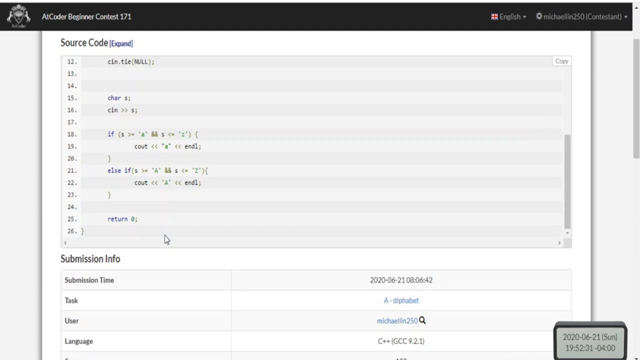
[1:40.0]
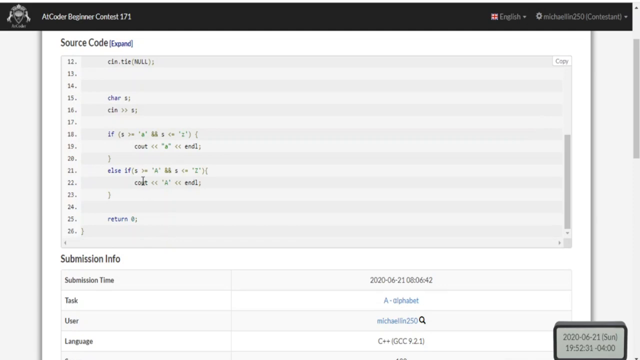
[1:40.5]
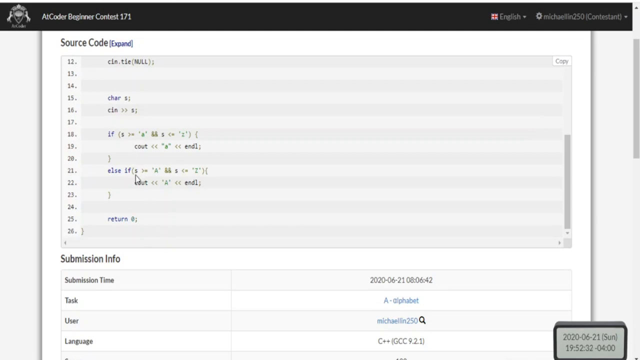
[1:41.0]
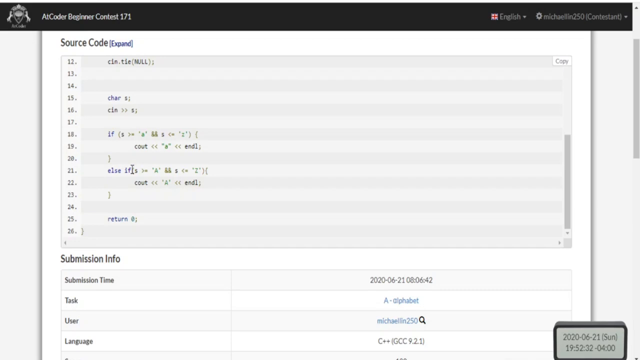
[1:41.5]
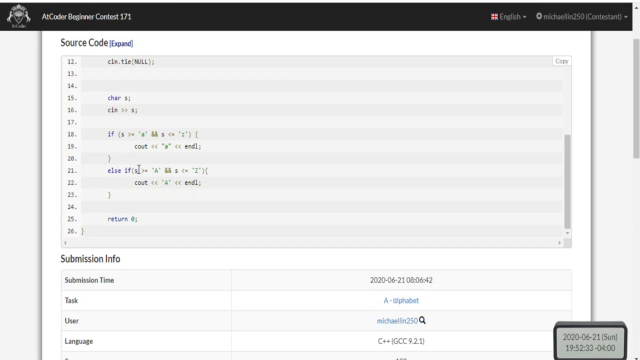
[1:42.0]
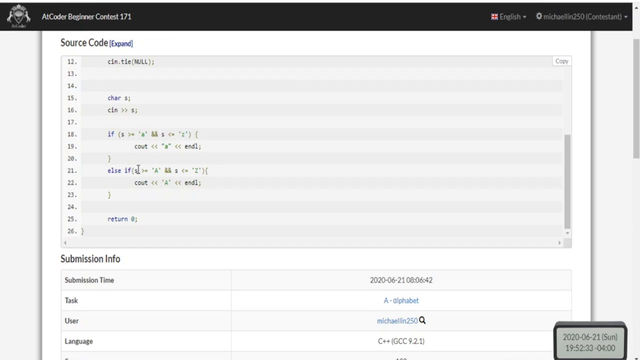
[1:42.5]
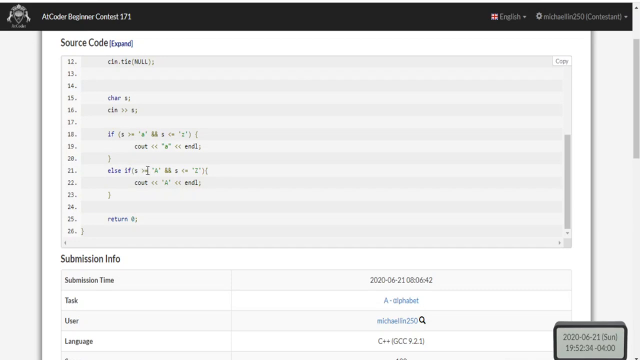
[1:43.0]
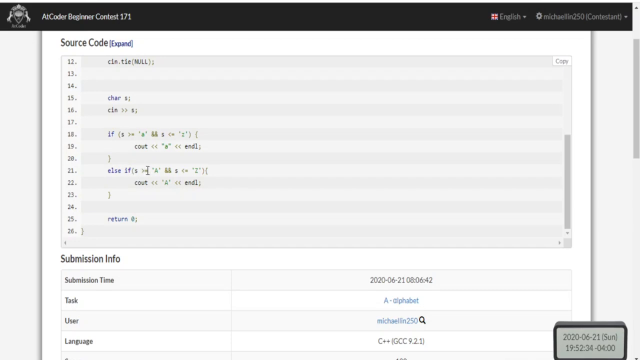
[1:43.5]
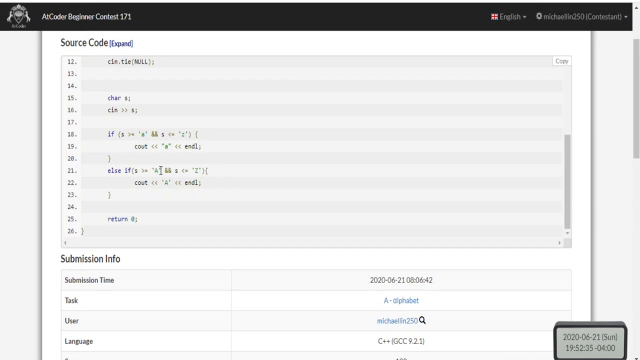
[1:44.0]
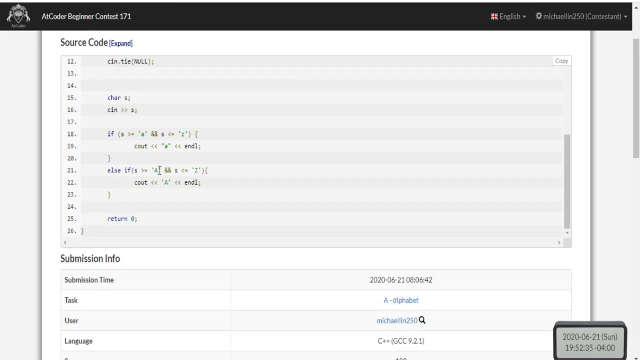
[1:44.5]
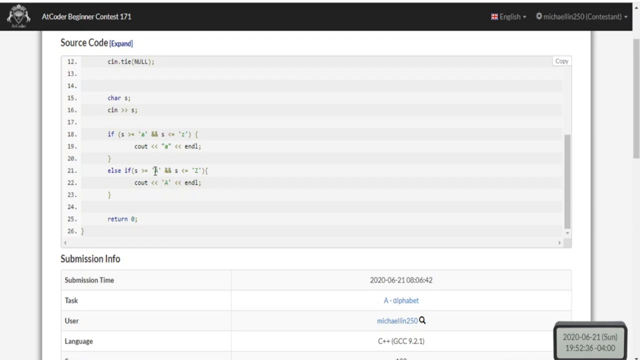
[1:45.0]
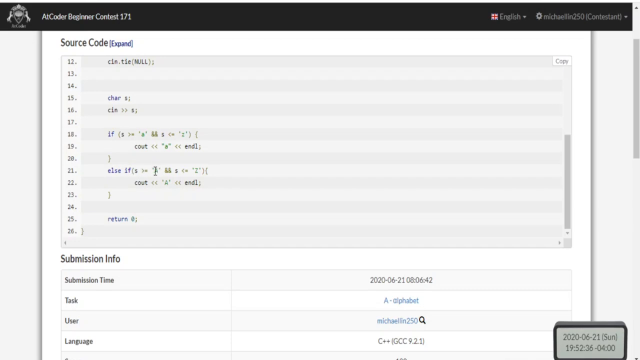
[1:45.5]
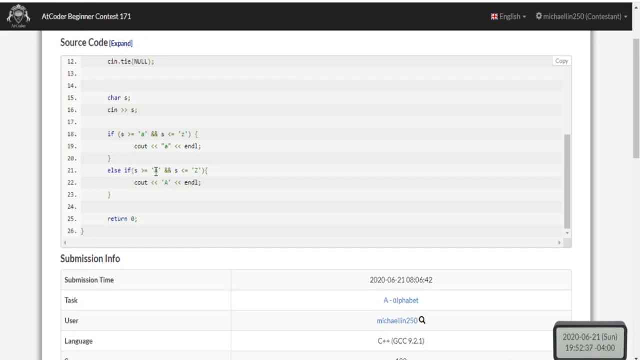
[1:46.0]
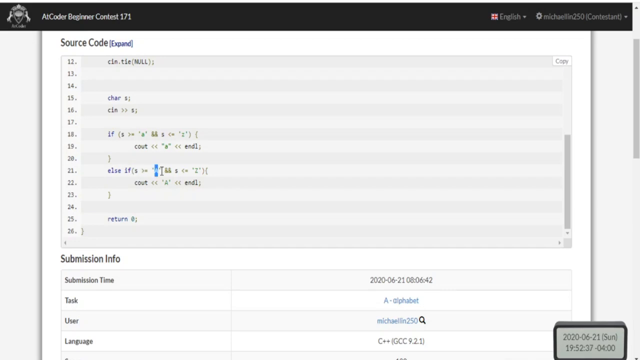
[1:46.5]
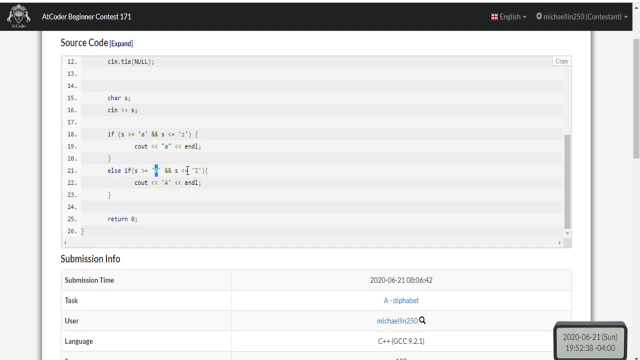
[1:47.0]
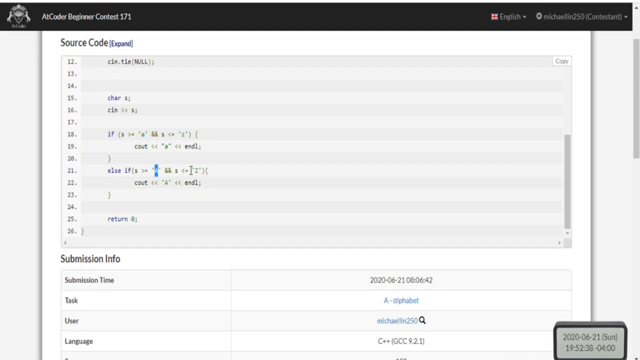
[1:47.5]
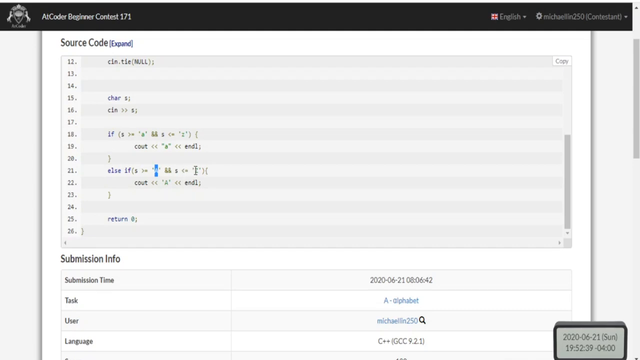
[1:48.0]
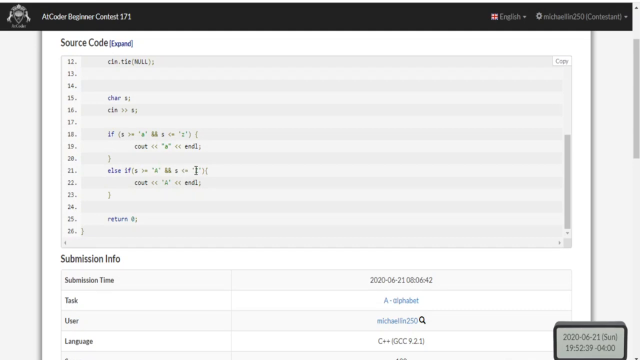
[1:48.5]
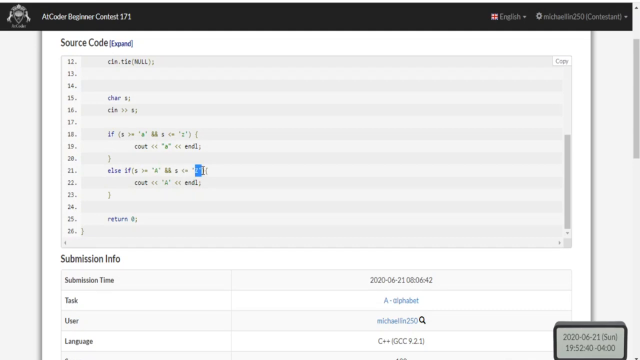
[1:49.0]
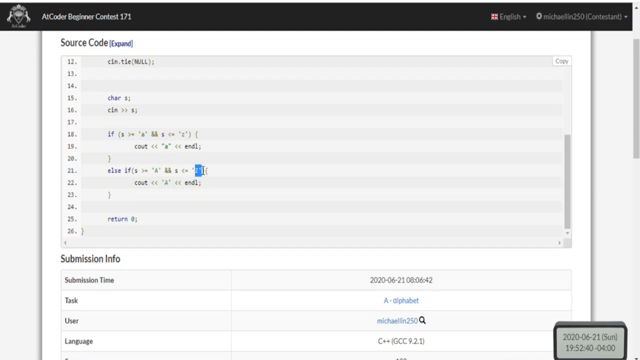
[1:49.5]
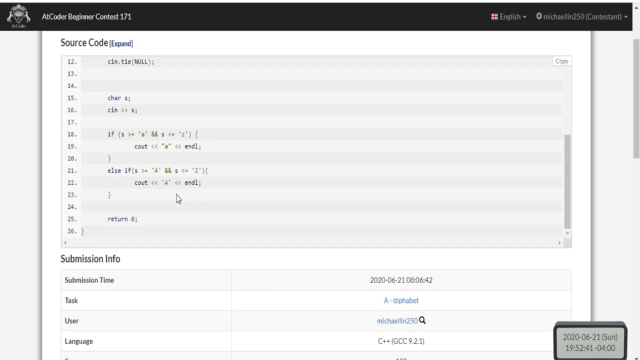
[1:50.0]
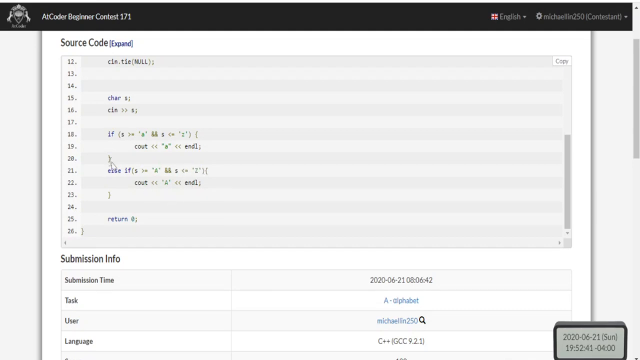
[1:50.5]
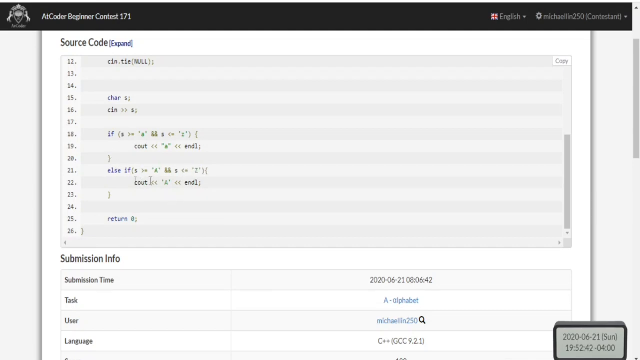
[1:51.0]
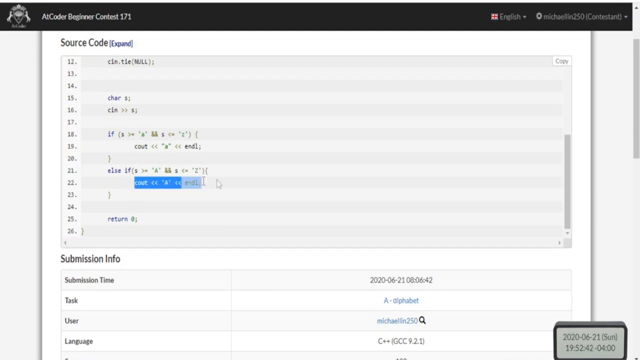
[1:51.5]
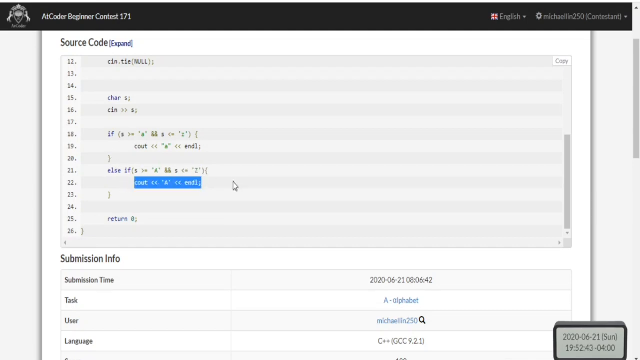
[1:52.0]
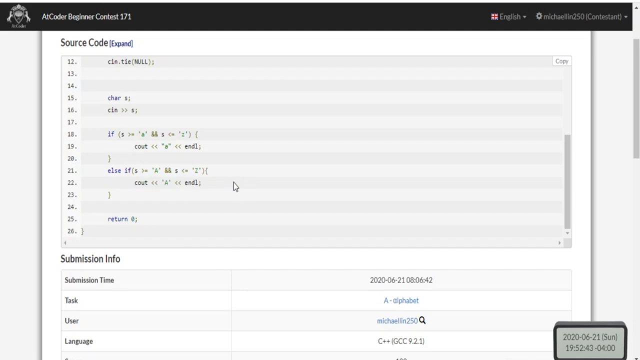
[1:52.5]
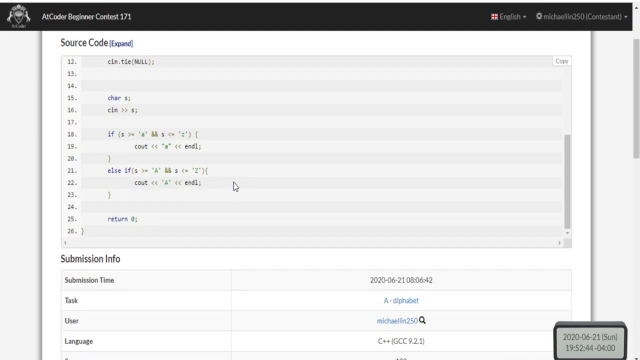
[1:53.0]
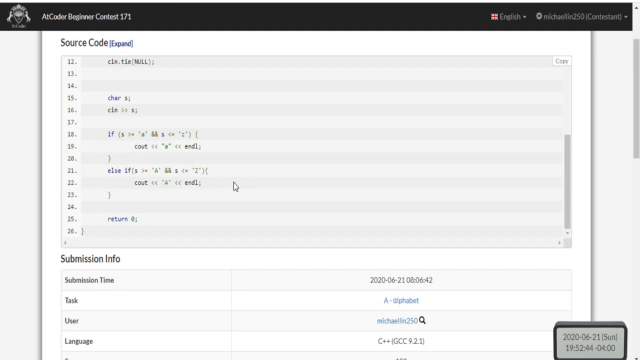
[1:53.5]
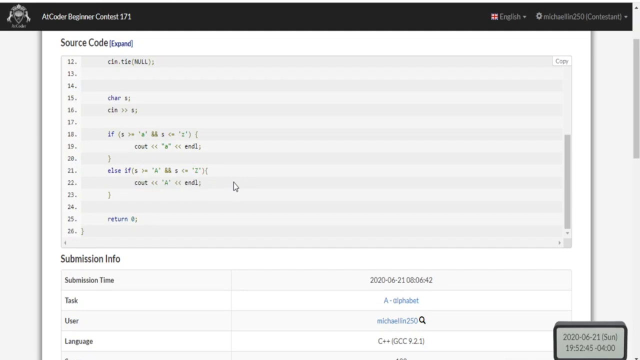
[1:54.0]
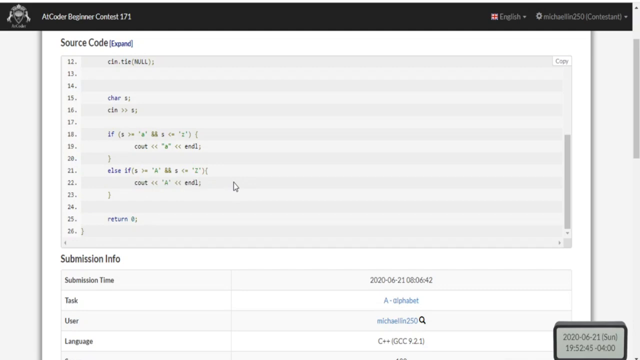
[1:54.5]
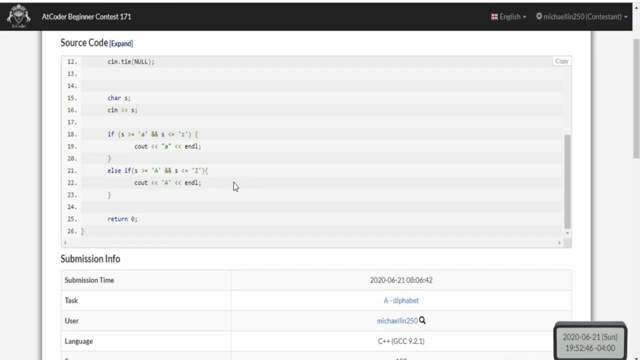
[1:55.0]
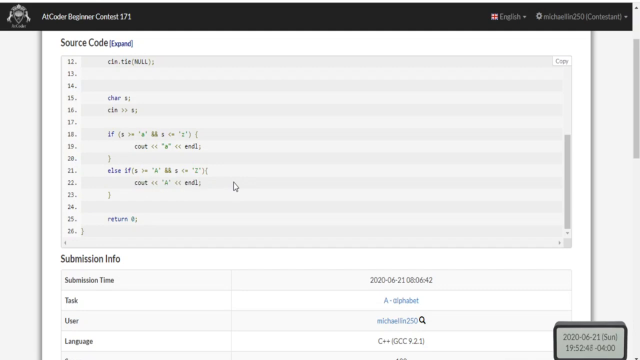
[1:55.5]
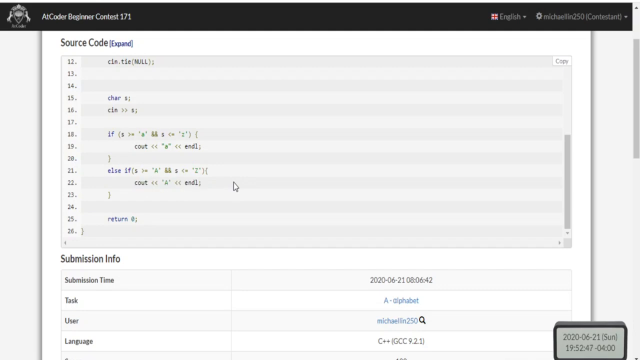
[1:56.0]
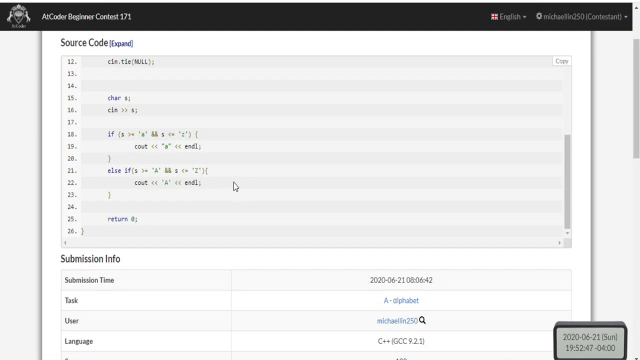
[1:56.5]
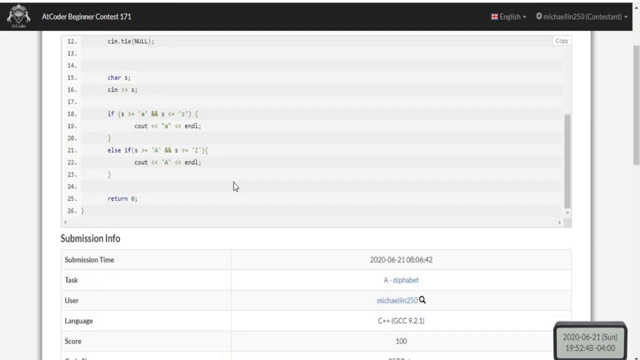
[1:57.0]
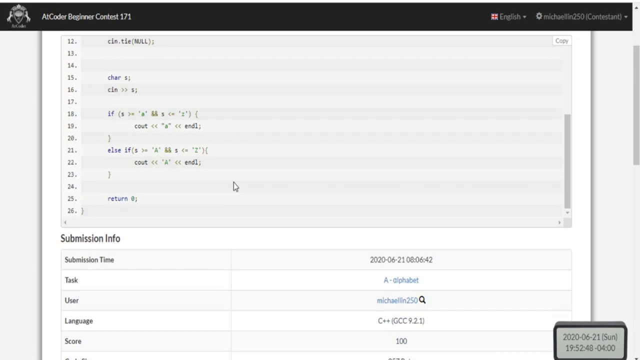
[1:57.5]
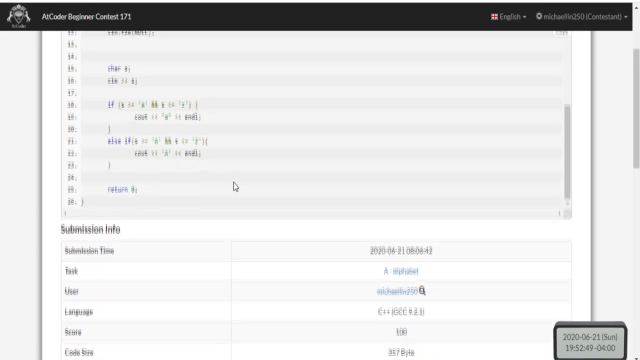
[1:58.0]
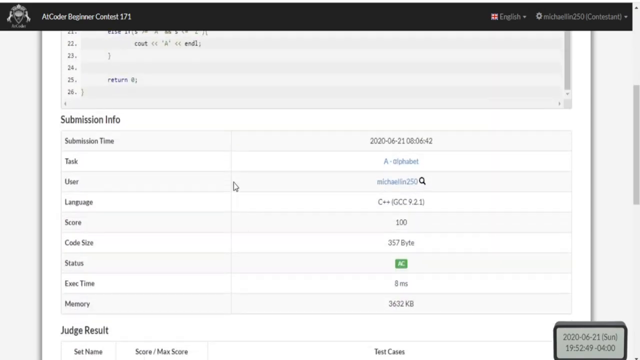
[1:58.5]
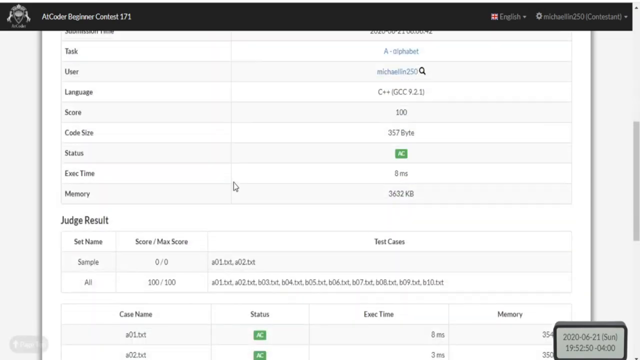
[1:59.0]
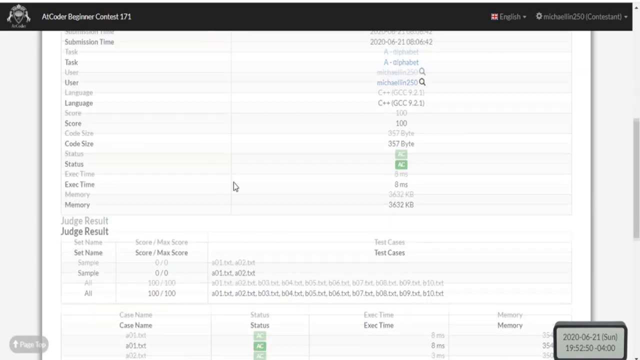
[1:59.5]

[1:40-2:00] Someone's computer screen shows what looks like a program being created, or at least code being reviewed. At the top is a black banner running left to right, with silver text in the upper left reading "At Coder Beginner Contest 171." In the upper right are two drop-downs with English and the username selected. Below is a virtual sheet of paper headed "Source Code," with the option to expand right after it. The next area has lines numbered 12 through 26, with some labeled variables, an if and an if else function, and a return at the bottom on line 25. The cursor is in the if else function and the very end of it is highlighted. The cursor then goes down to the next line and the entire line of that if else function is highlighted, then deselected, and the view scrolls down a little, revealing a next section titled "Submission Info."